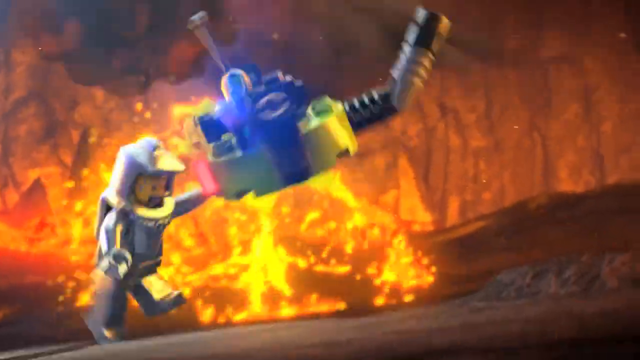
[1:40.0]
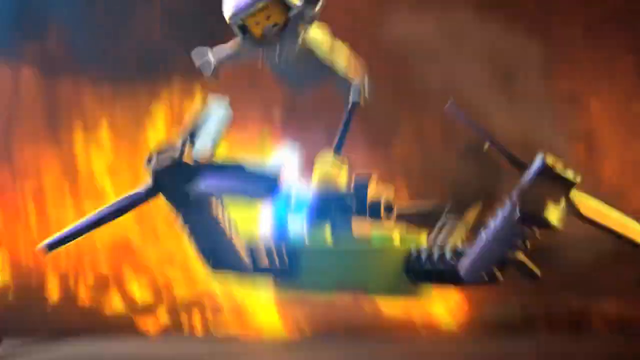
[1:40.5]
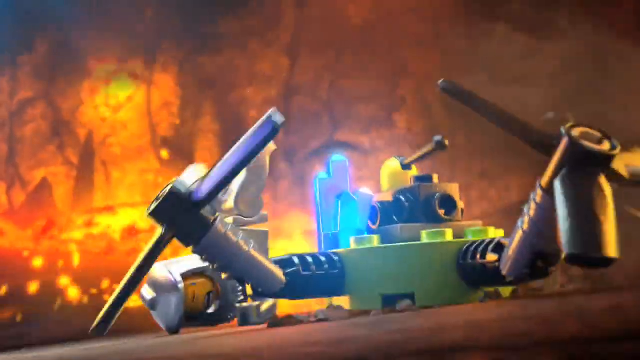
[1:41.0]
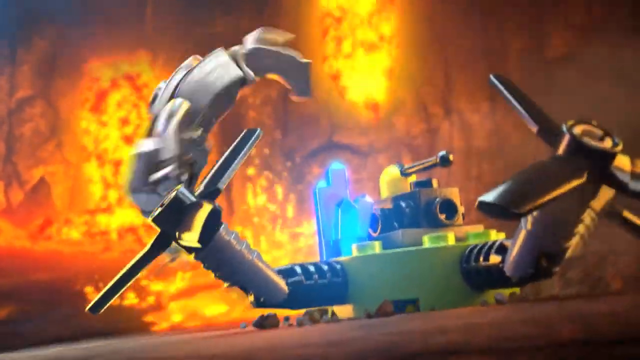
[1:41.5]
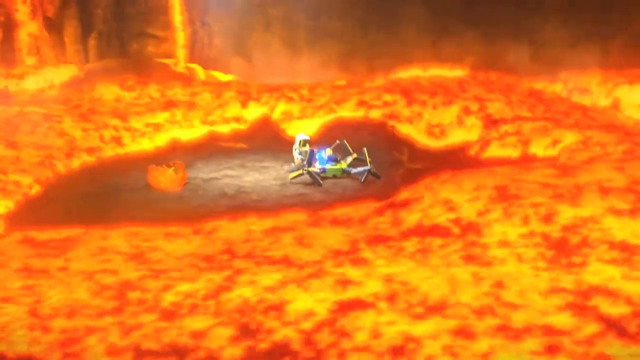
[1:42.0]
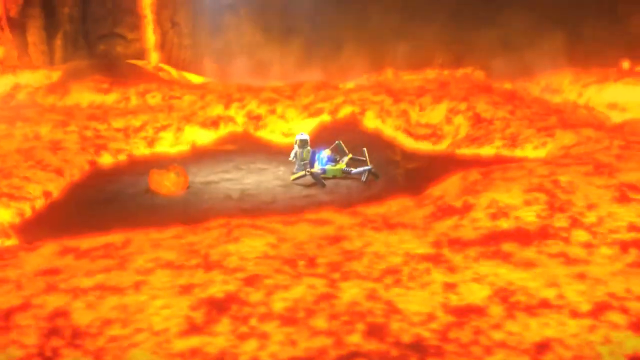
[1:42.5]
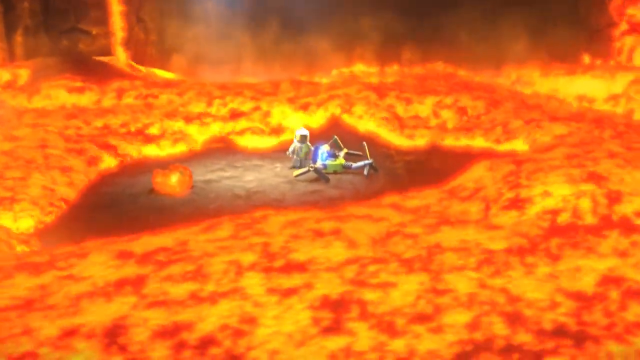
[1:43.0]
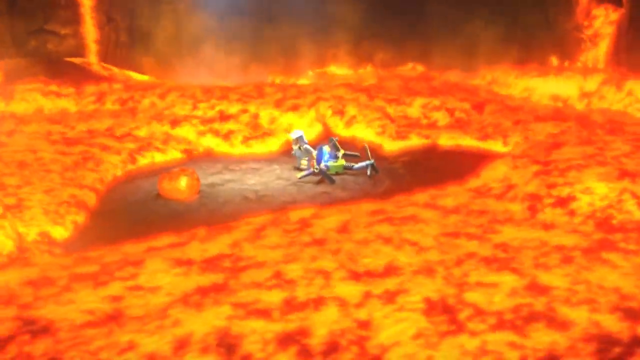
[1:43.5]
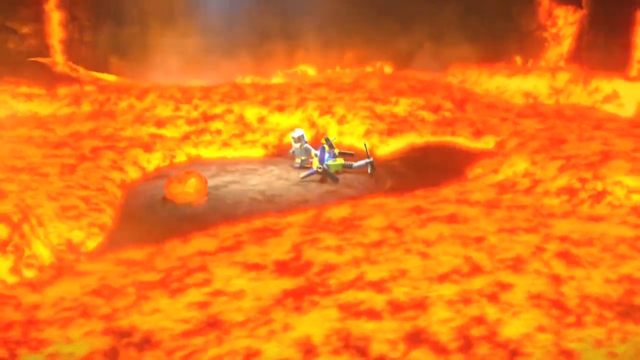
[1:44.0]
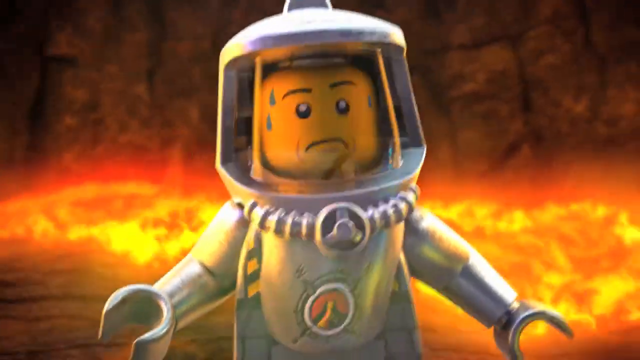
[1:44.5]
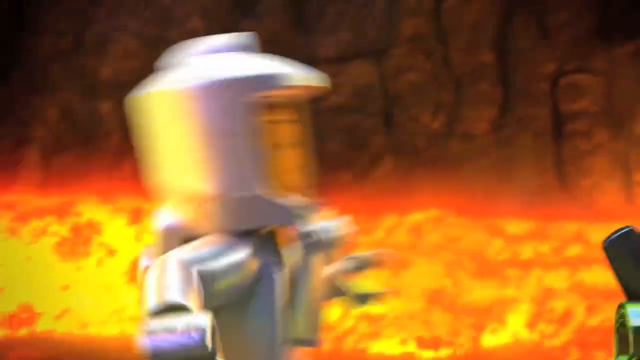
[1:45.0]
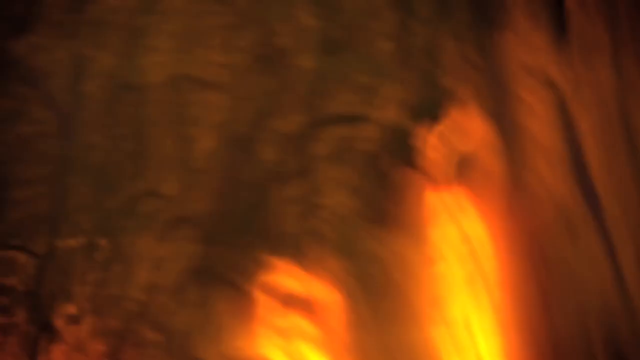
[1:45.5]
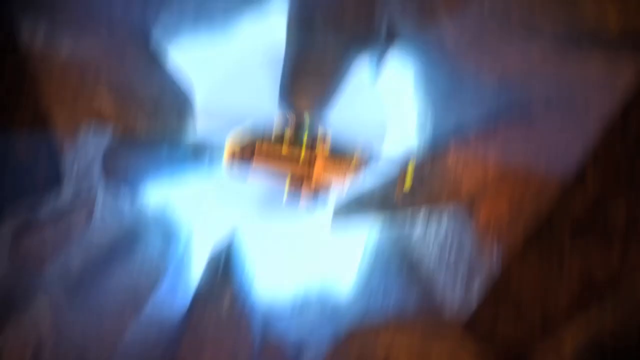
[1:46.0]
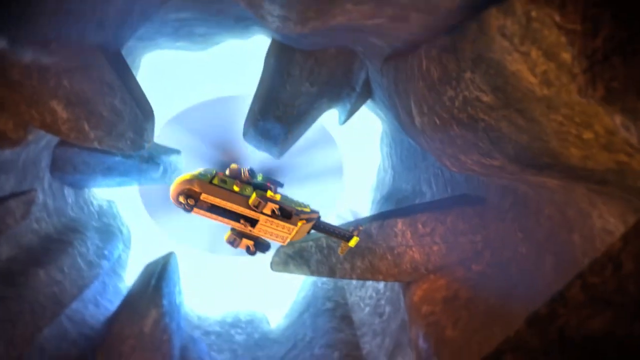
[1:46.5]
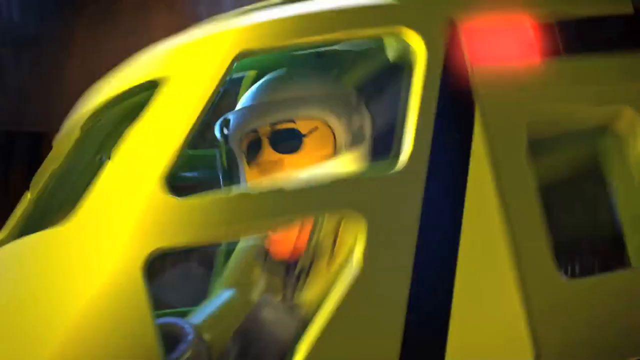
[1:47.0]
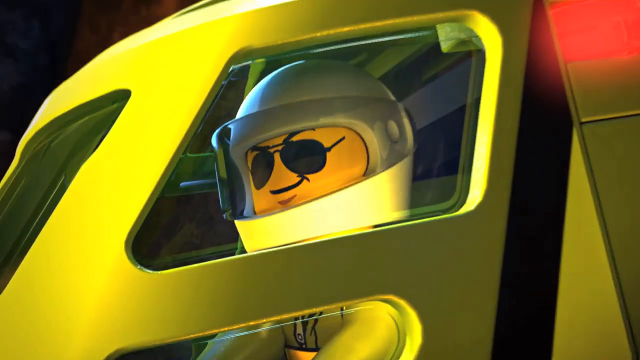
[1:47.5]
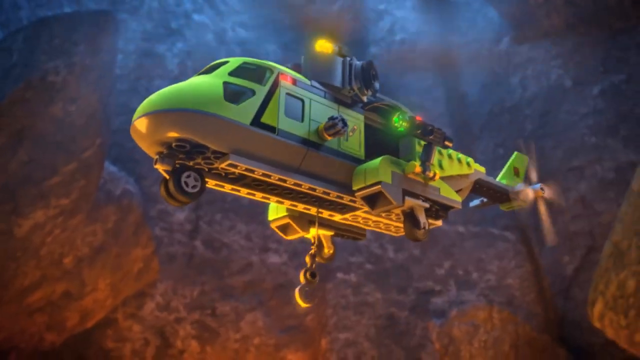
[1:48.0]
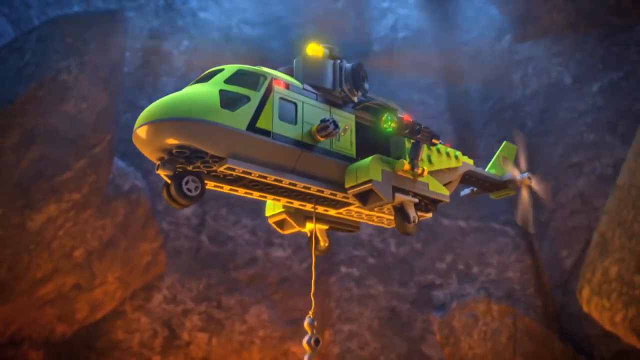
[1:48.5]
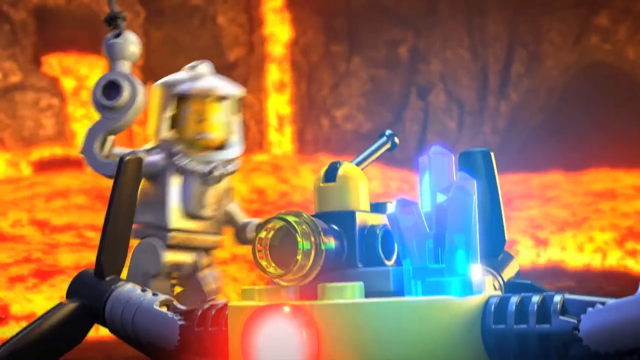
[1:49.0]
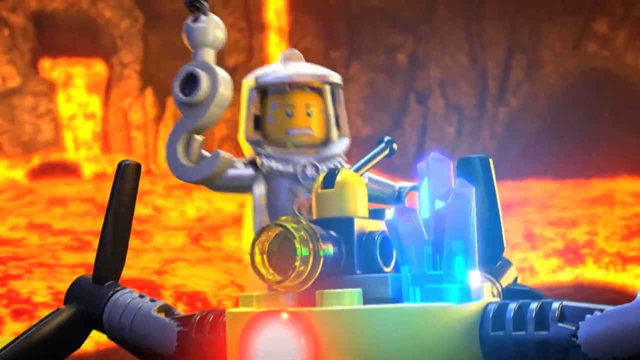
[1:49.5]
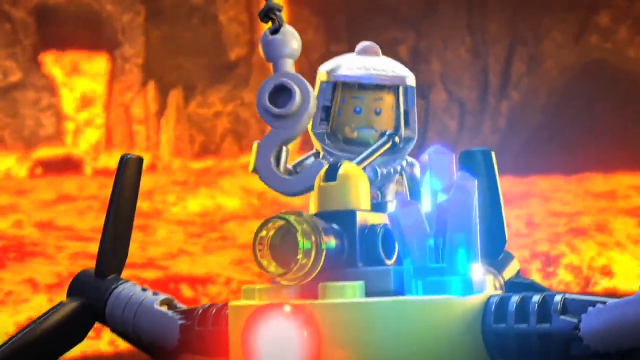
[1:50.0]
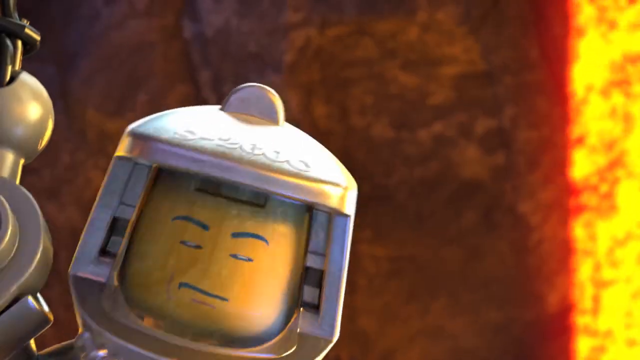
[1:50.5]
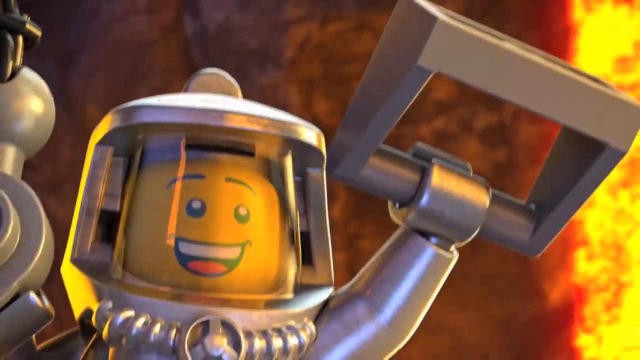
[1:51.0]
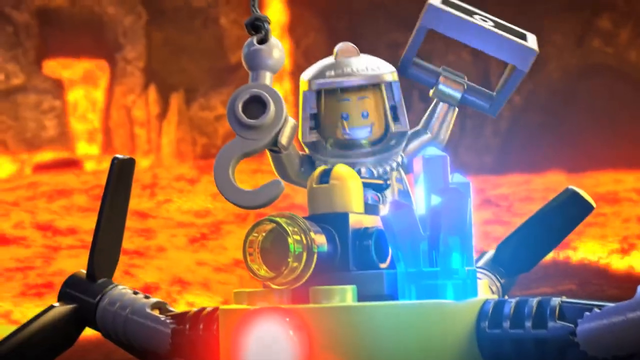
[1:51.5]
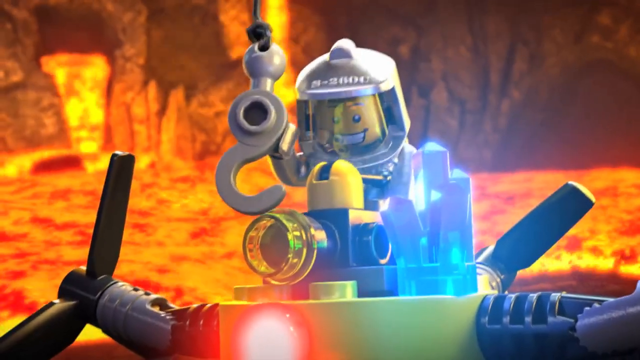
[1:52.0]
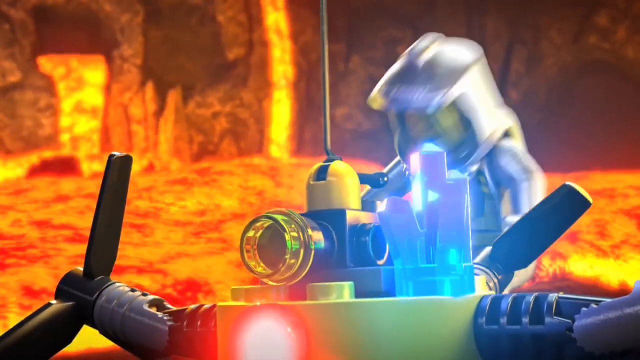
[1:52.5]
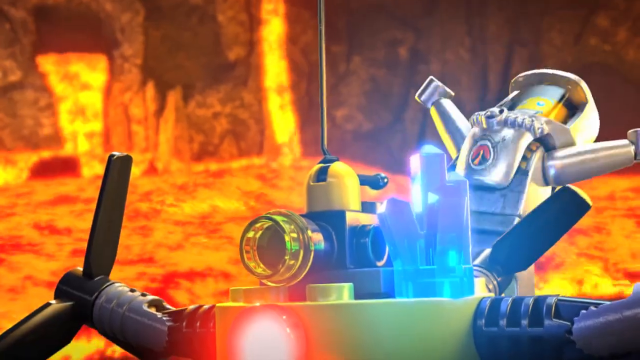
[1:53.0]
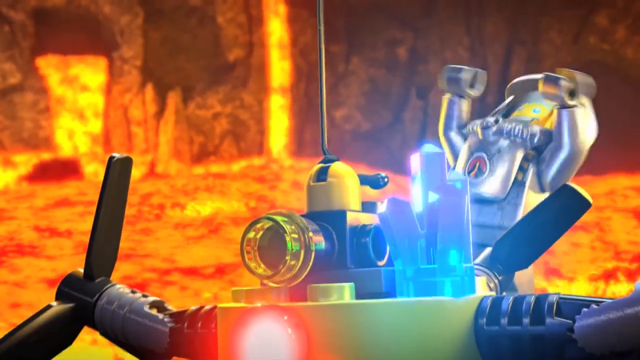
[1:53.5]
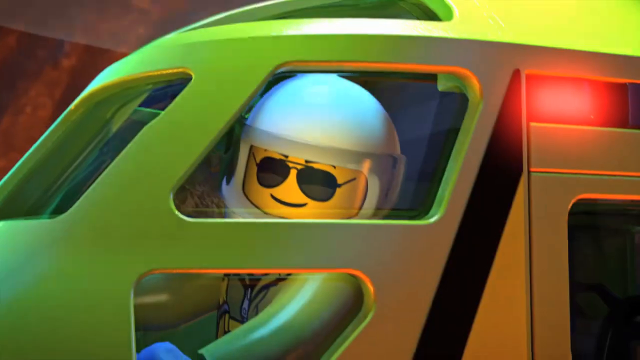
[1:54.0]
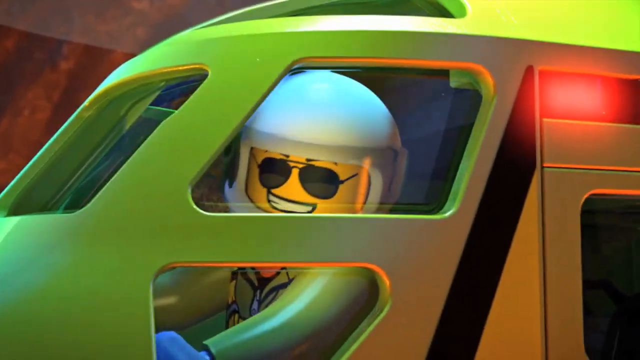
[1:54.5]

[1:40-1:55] Inside the volcano, a little Lego man is trying to be rescued by the drone. Something happens to the drone and it crashes. Lava now forms all around the little Lego man's feet, and it appears he is about to be eaten by the lava. At the last minute, a helicopter lowers from the opening in the volcano. He hooks onto a hook dangling below the helicopter, and he appears to hook the drone onto it as well, so that he saves the drone and rides it up with the helicopter as they escape the hot lava floor of the volcano.